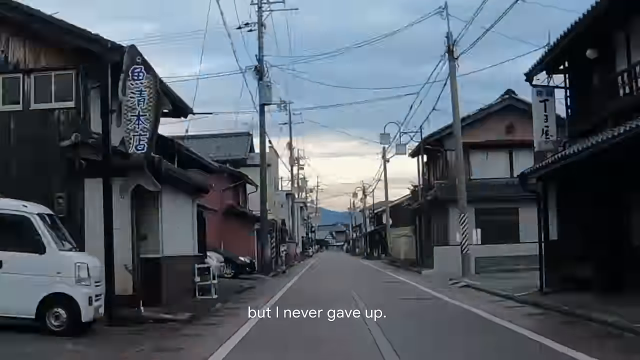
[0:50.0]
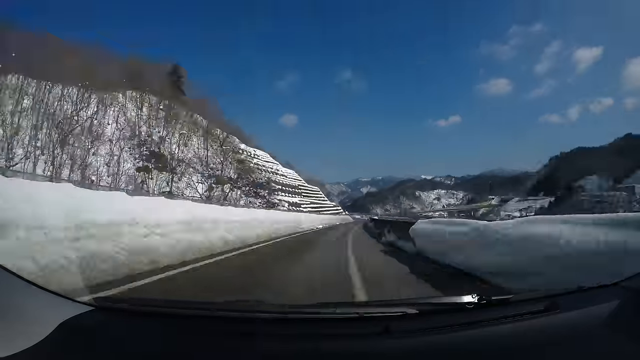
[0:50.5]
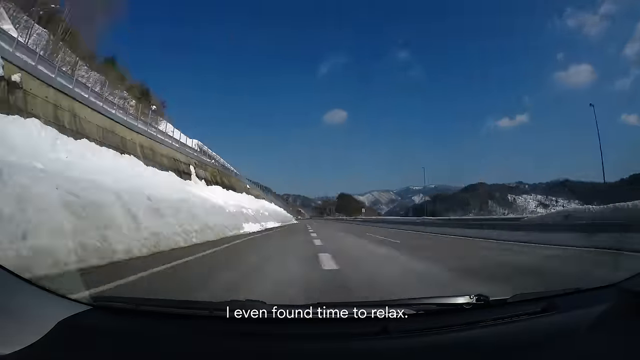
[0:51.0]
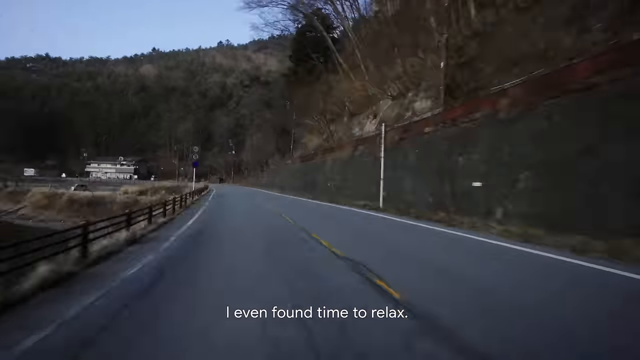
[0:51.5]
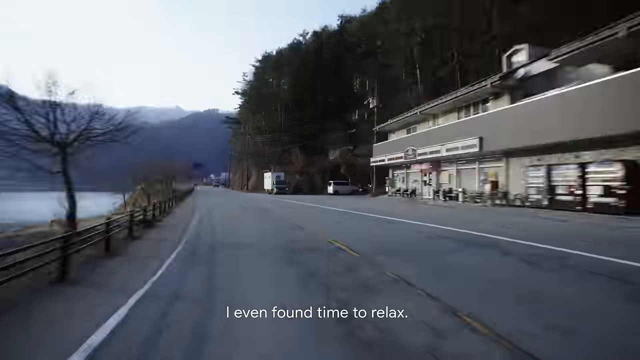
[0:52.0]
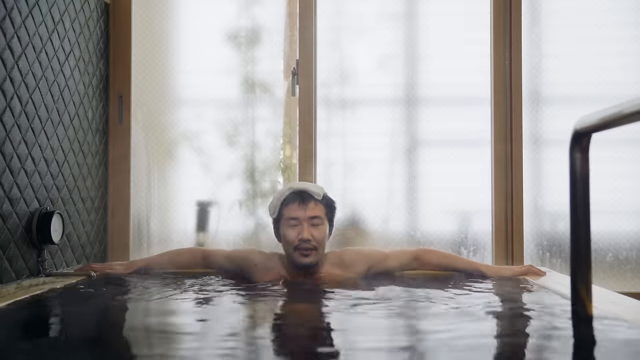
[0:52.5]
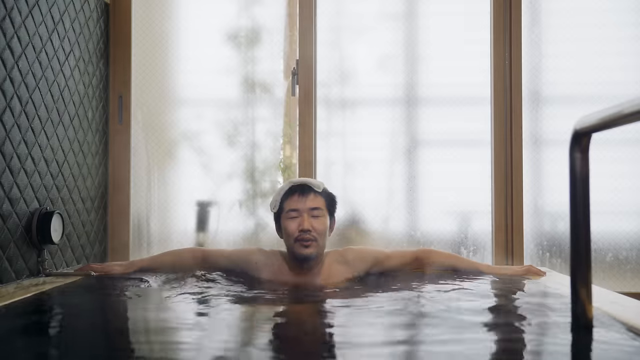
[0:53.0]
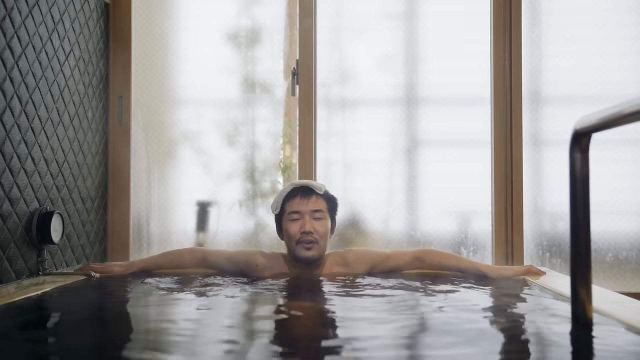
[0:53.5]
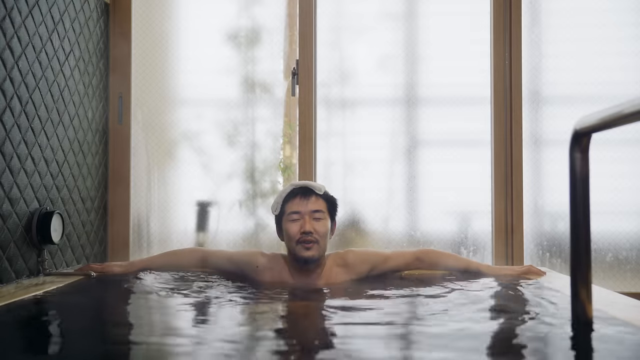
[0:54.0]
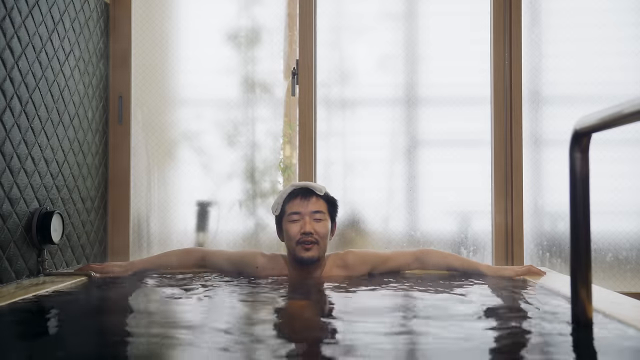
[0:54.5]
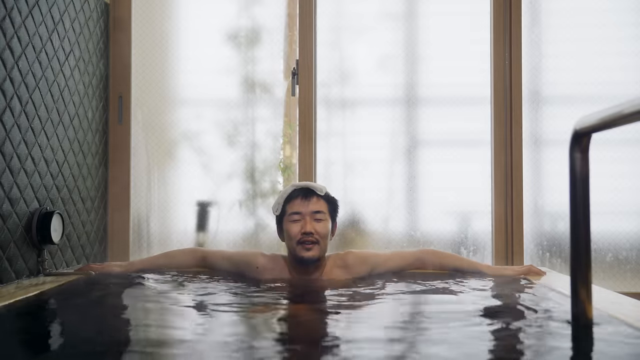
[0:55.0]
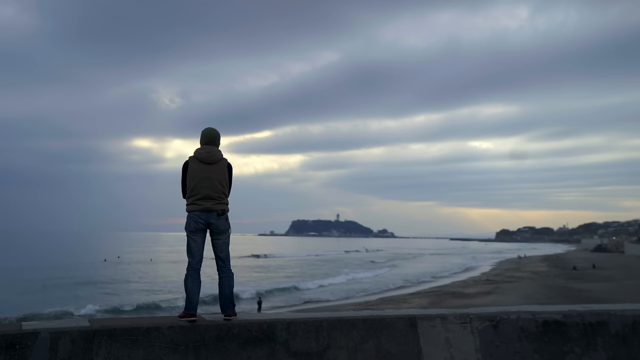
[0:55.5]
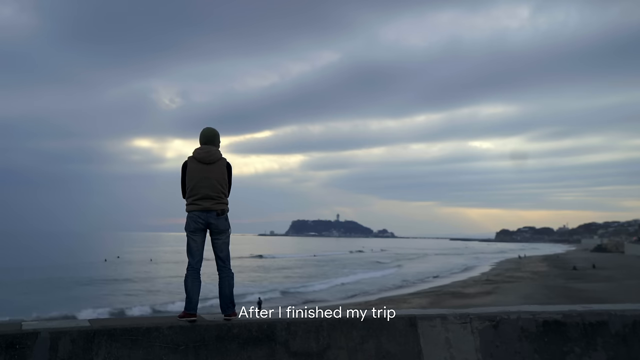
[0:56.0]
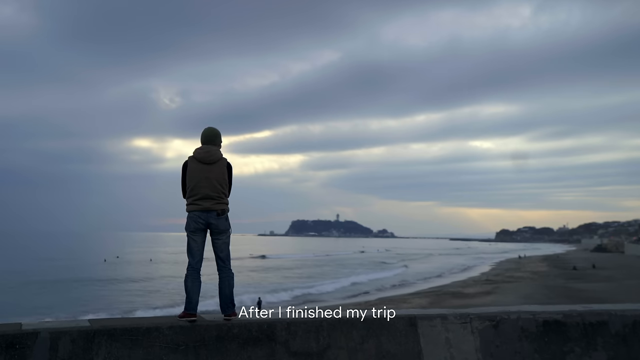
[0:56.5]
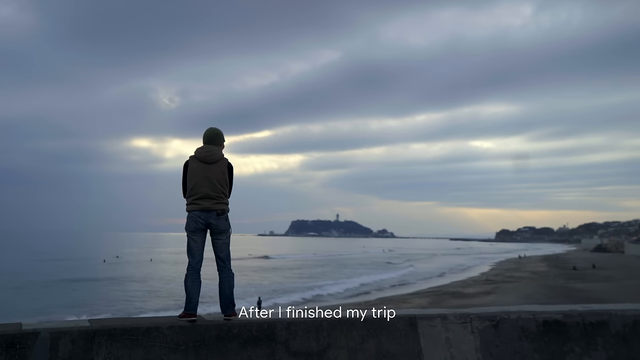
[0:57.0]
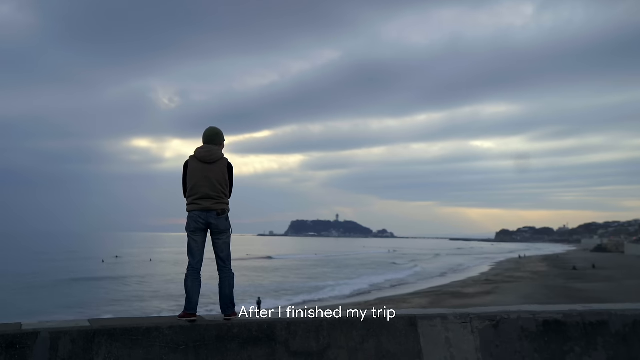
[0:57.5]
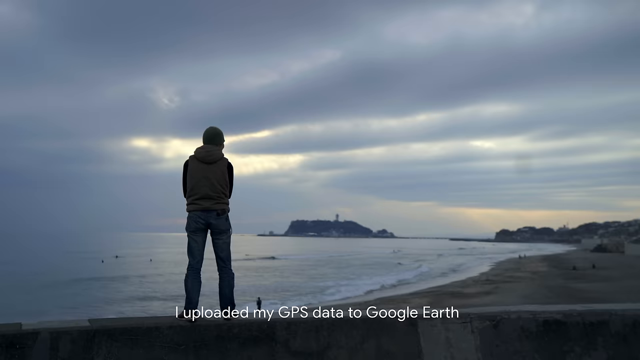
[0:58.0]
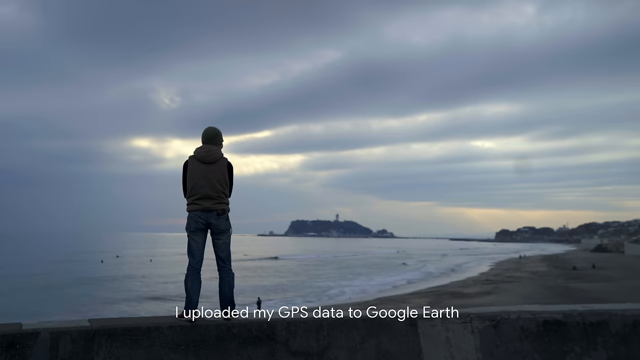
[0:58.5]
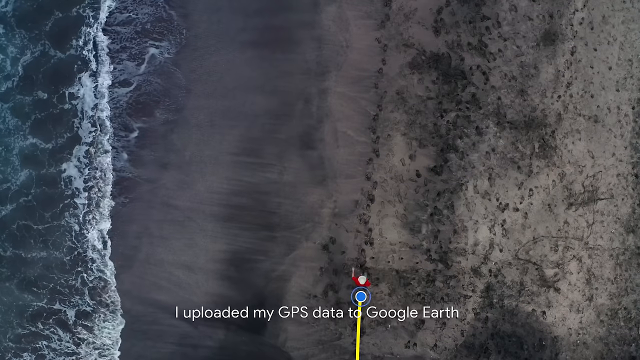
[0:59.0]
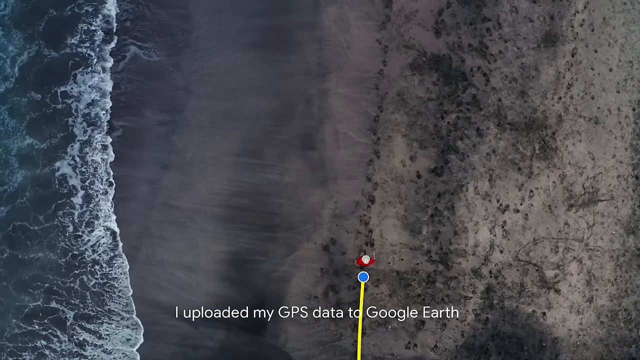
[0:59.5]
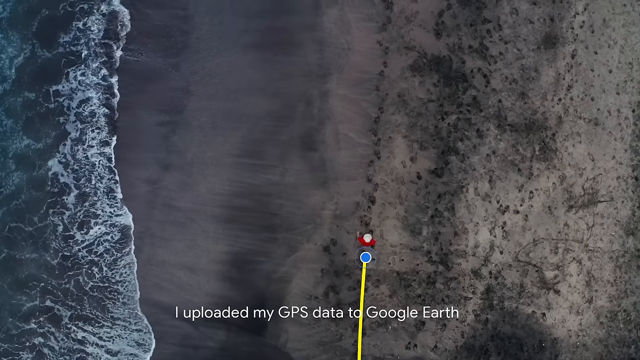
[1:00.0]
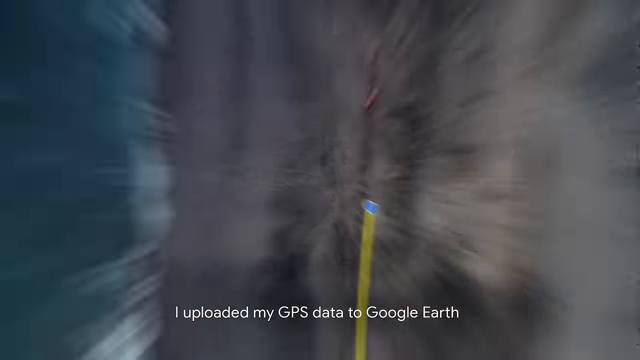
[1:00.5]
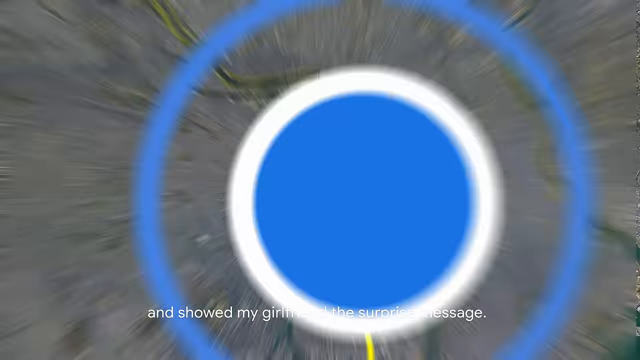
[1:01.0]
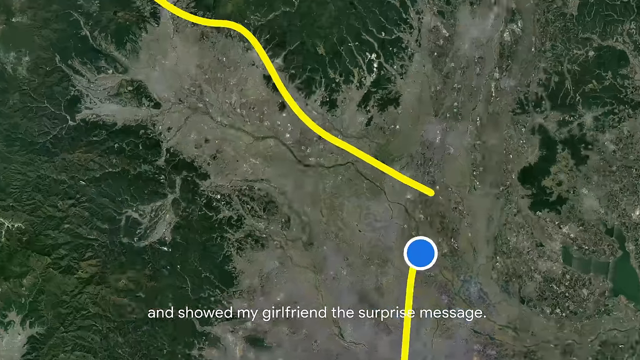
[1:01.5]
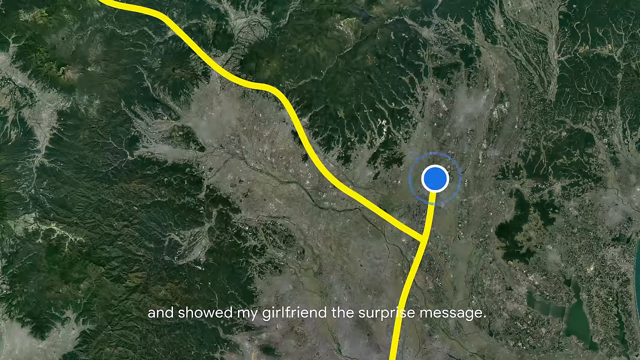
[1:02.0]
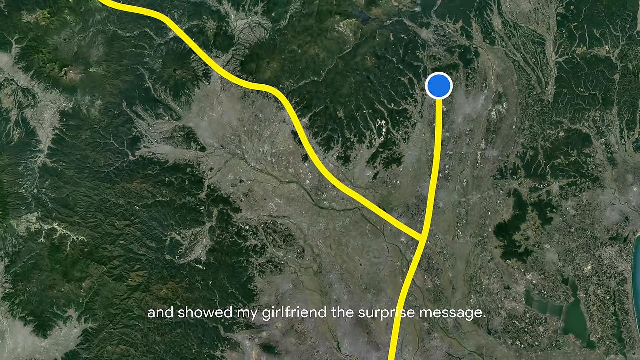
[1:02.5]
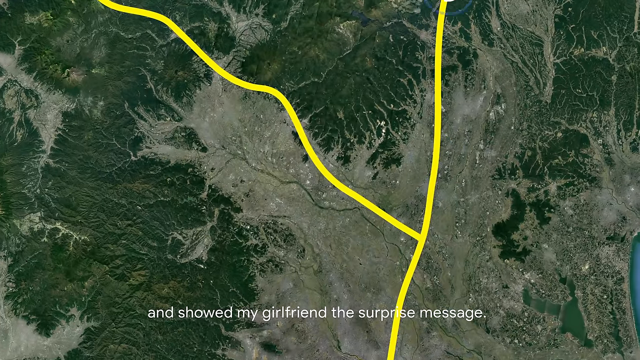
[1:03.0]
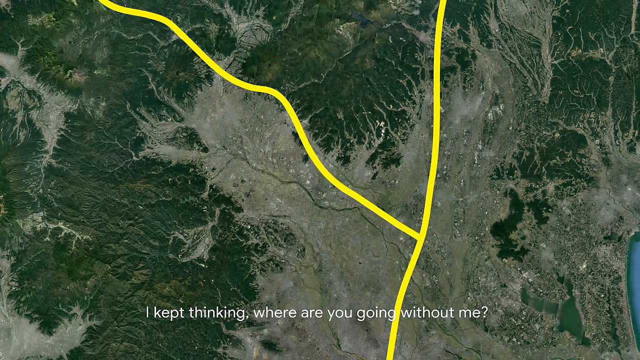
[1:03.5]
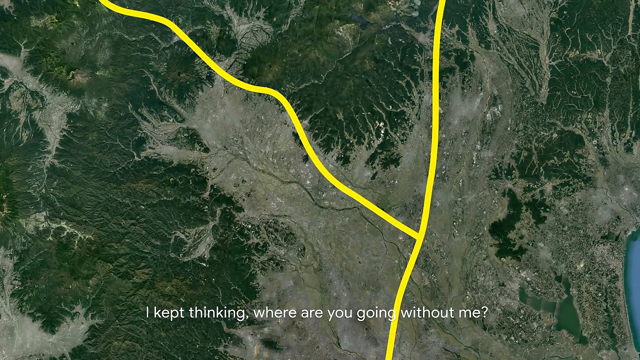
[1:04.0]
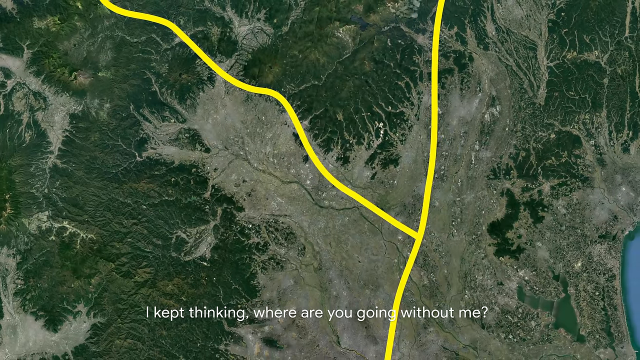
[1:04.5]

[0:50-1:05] The footage moves in very fast forward through a city and then through mountains, and then he sits in a hot tub, with text reading "I found time to relax." Text then reads "after I finished my trip, I uploaded my GPS data to Google Earth" as he stands on the shore looking out at the ocean; it is dreary and looks cloudy. A Google Earth map with lines on it follows, and at the end, over the Google map image, text reads "I kept thinking, where are you going without me?"